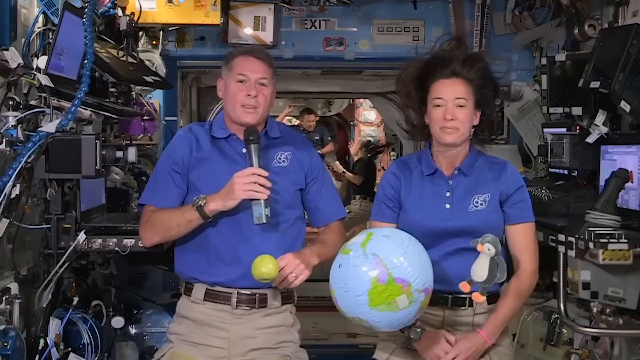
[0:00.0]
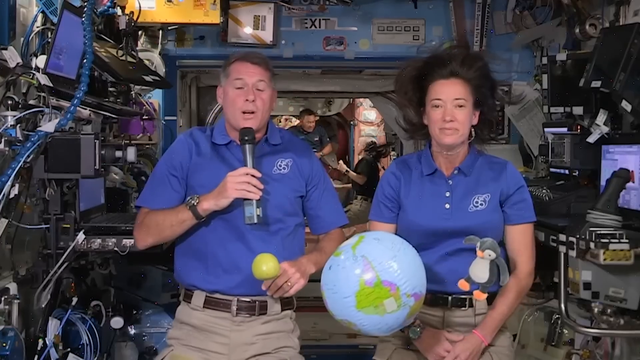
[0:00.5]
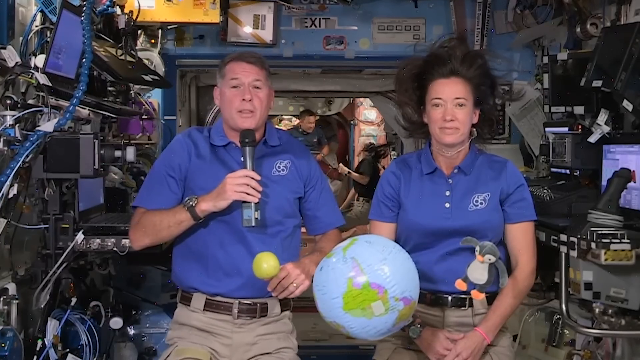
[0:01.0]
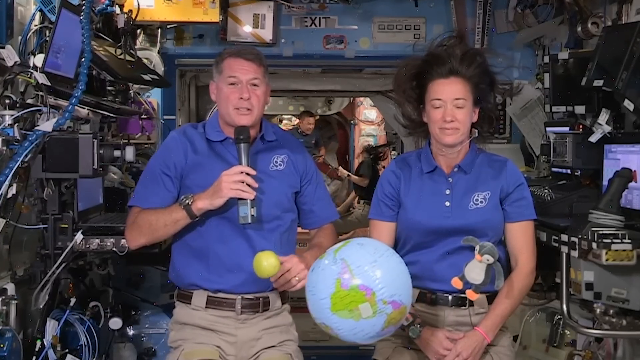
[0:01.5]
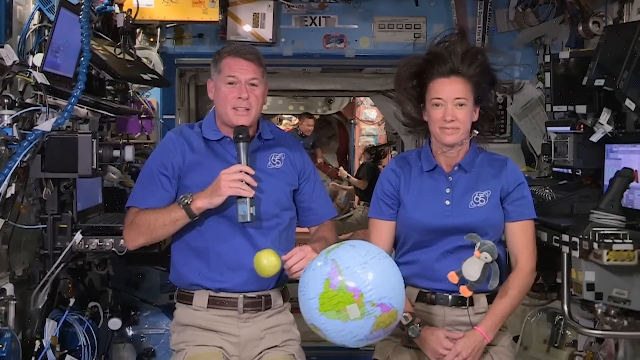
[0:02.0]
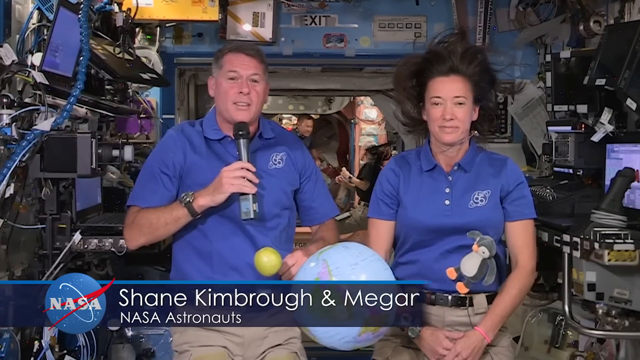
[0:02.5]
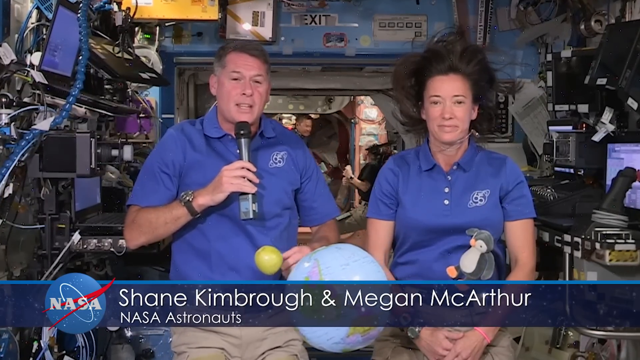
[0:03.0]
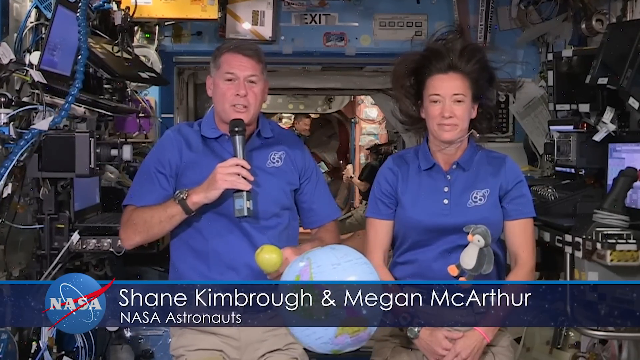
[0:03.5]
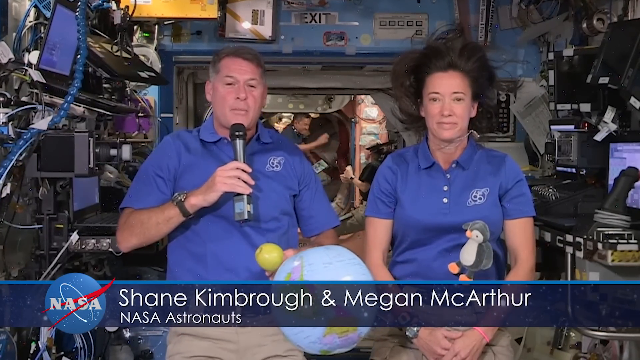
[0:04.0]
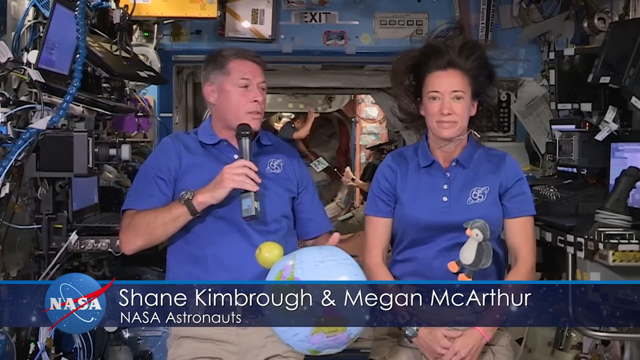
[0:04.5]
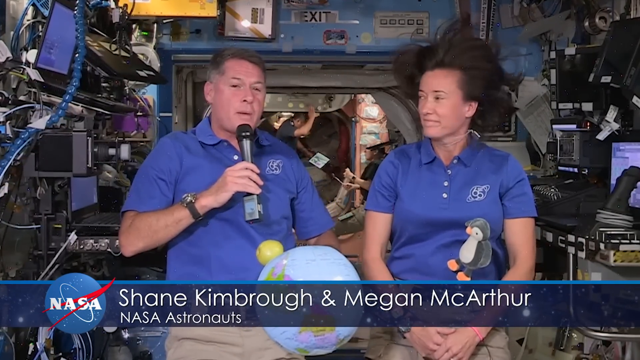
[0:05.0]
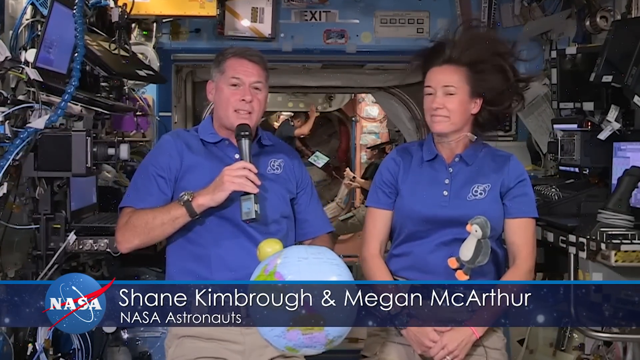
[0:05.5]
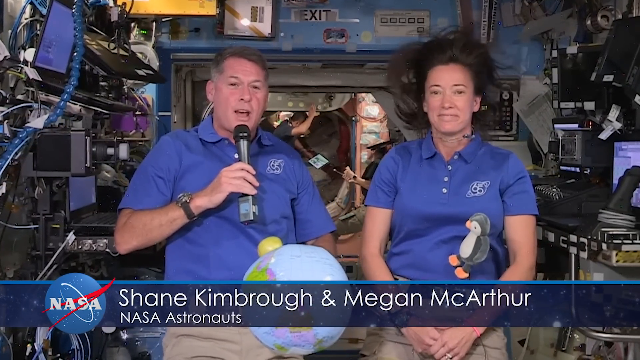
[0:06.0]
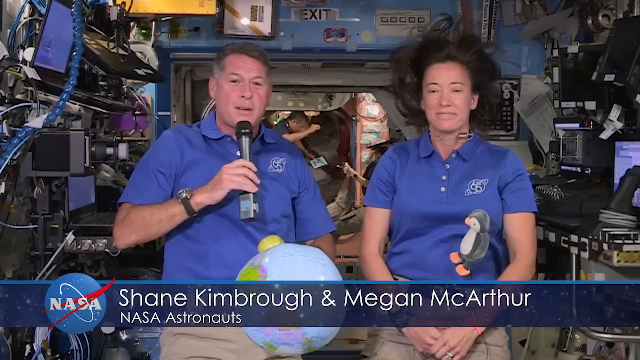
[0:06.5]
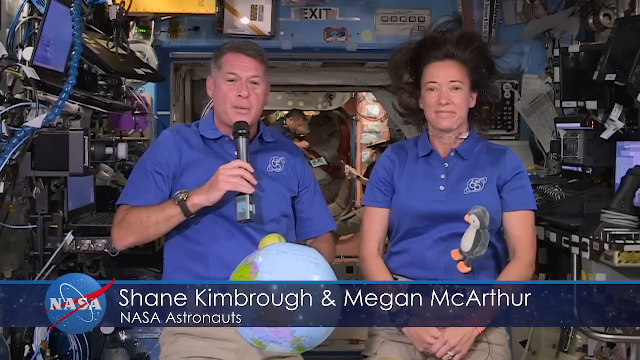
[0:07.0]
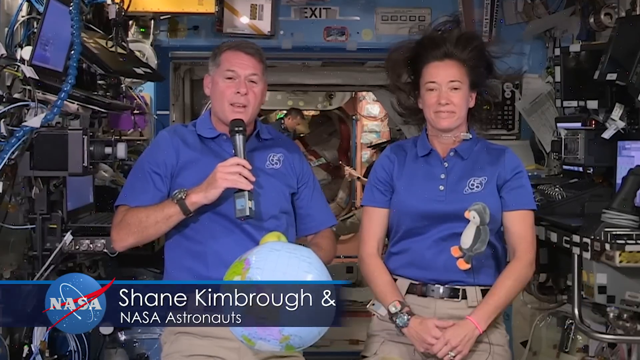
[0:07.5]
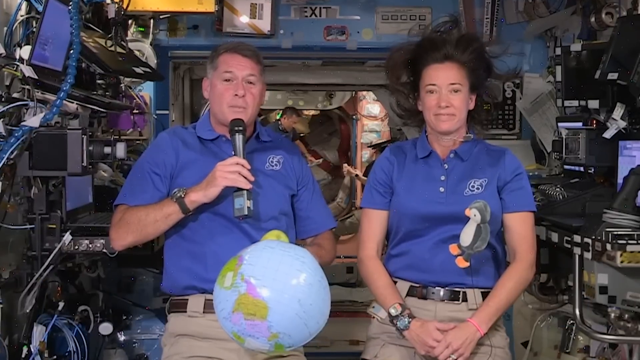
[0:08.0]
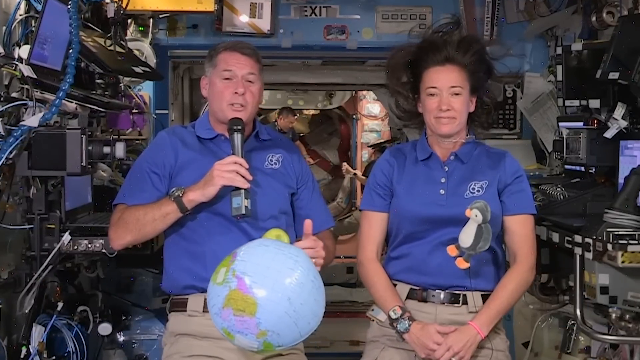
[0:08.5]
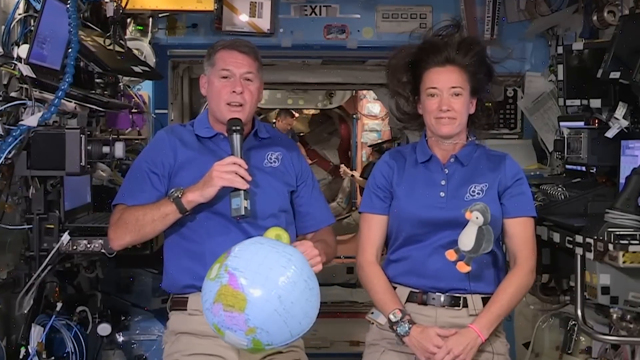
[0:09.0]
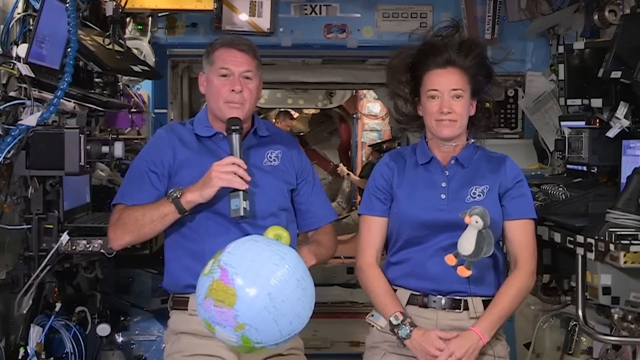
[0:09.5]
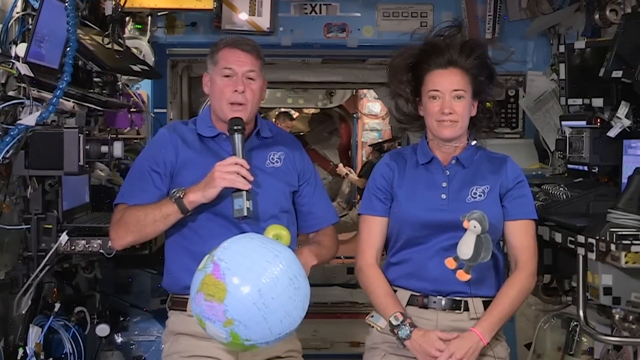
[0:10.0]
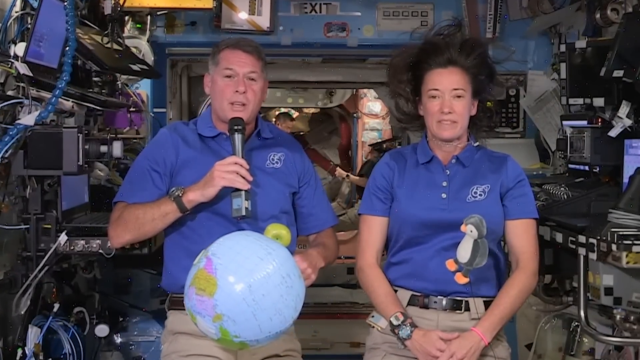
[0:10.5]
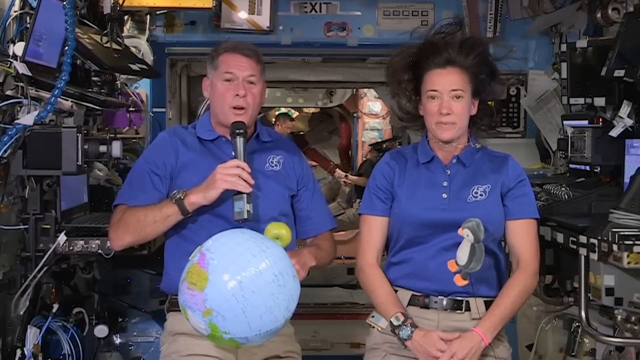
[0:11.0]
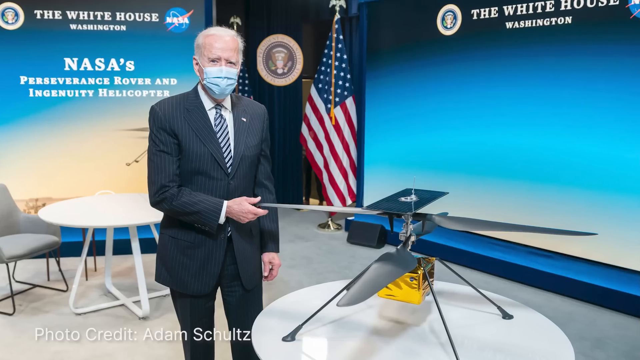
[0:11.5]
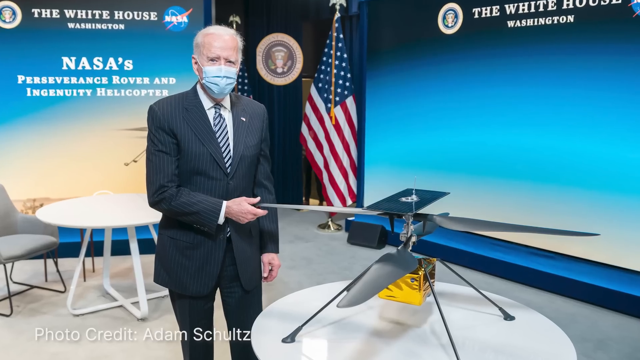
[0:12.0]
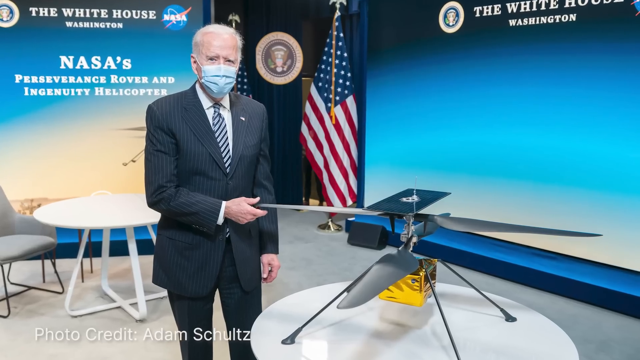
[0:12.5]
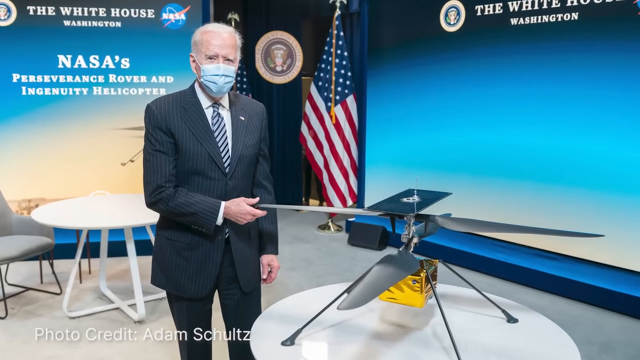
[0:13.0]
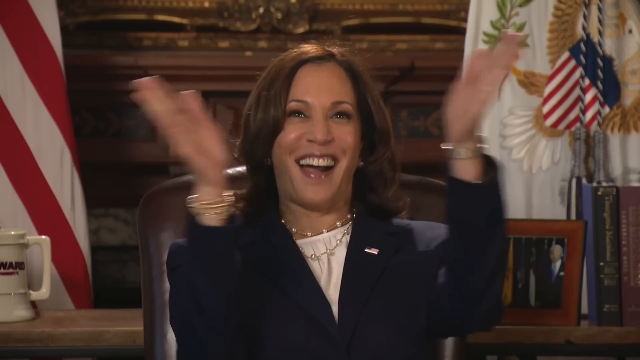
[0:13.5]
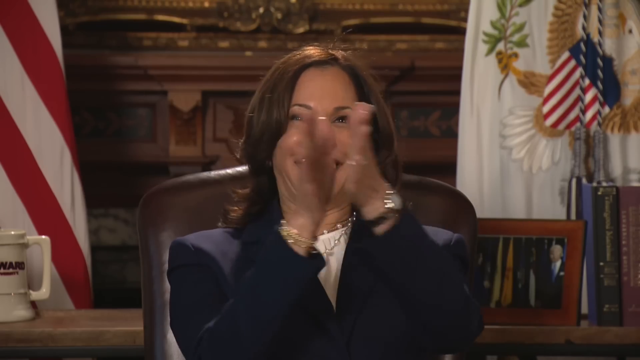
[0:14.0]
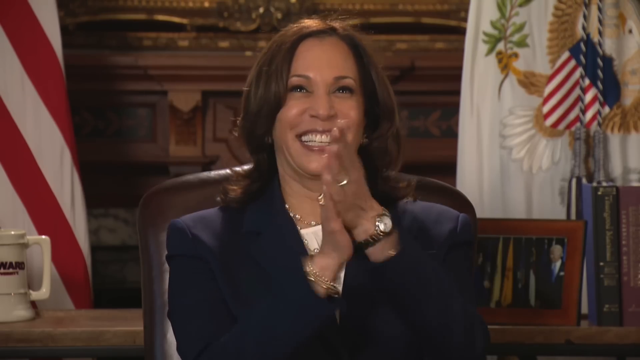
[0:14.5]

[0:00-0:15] Two astronauts, a man and a woman, appear on screen, with text identifying them as "Shane Kimbrough" and "Megan MacArthur." They seem to be either on a spaceship or on the International Space Station, apparently the International Space Station since they are floating. The man holds a microphone. A little globe floats around them, and what looks like a little penguin plushy is behind them. In the background, partly obscured, apparently two people are having a conversation and doing something. Lots of equipment from the space station surrounds the astronauts, and an exit sign is in the background over the area where the other people are. Microscopes, computer screens and various wirings are visible. The video then cuts to a picture of Joe Biden wearing a mask in some sort of NASA exhibit or museum with some sort of prototype technology. It then cuts to a clip of former Vice President Kamala Harris, excited and jovial, clapping and smiling a lot.